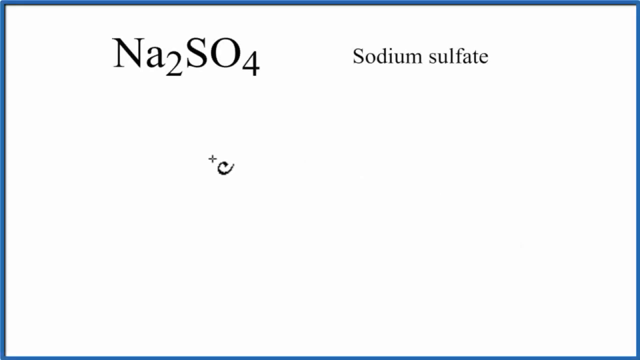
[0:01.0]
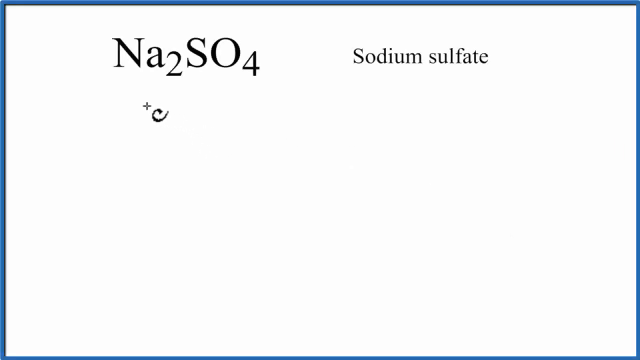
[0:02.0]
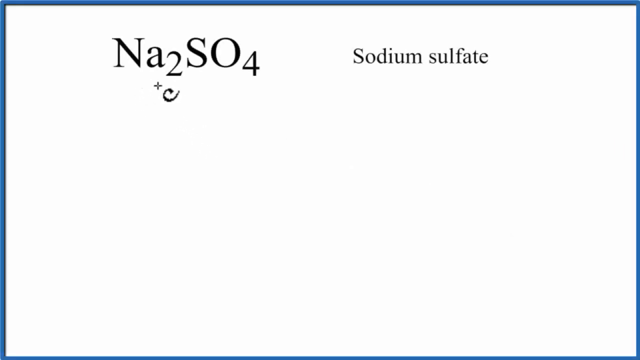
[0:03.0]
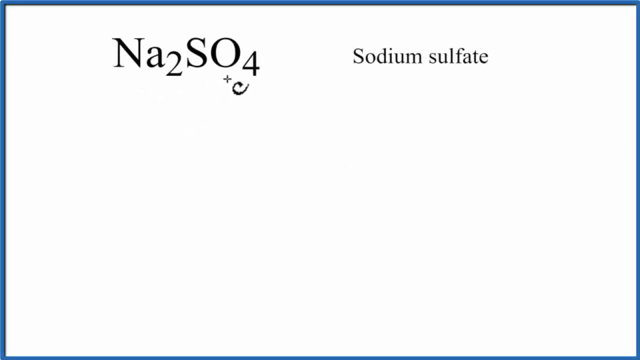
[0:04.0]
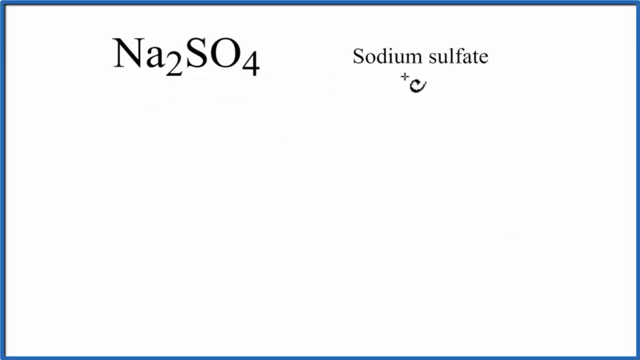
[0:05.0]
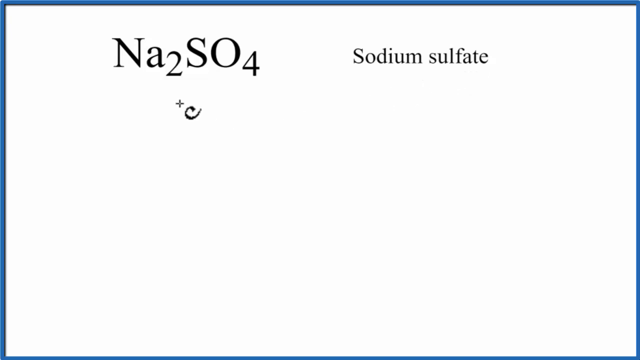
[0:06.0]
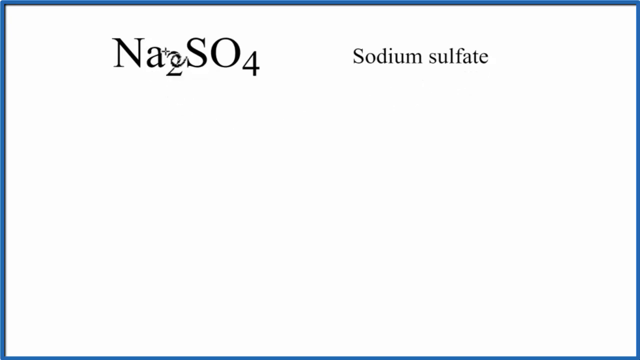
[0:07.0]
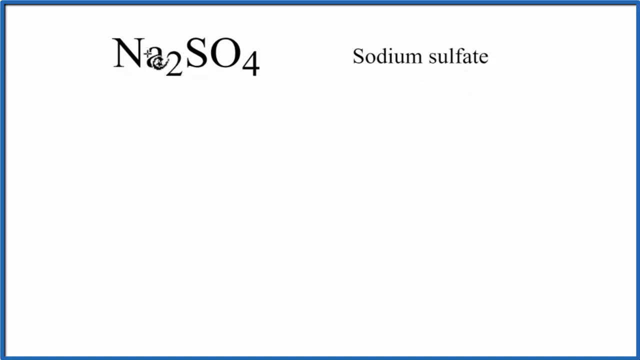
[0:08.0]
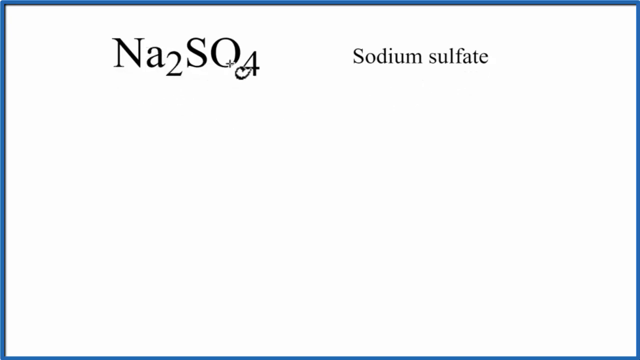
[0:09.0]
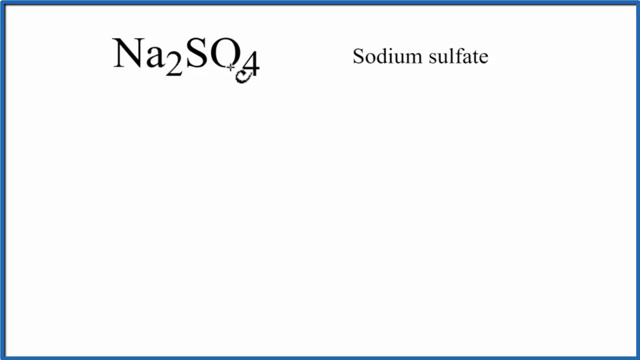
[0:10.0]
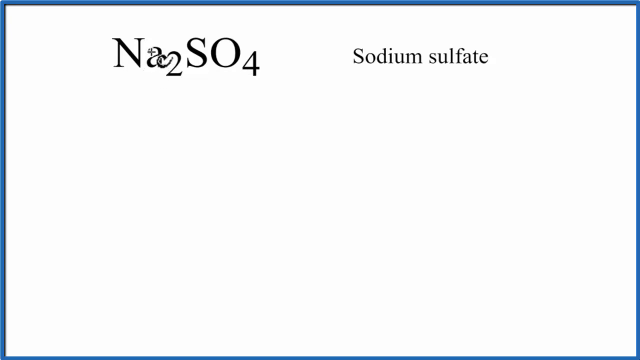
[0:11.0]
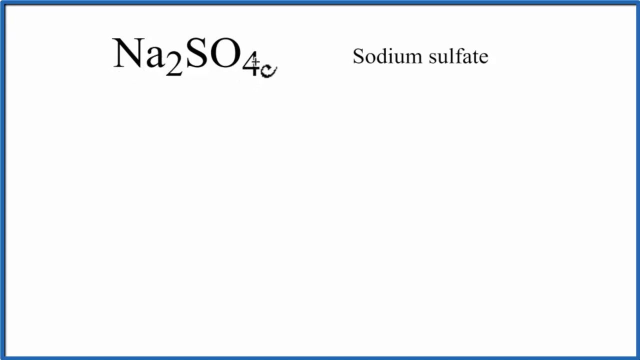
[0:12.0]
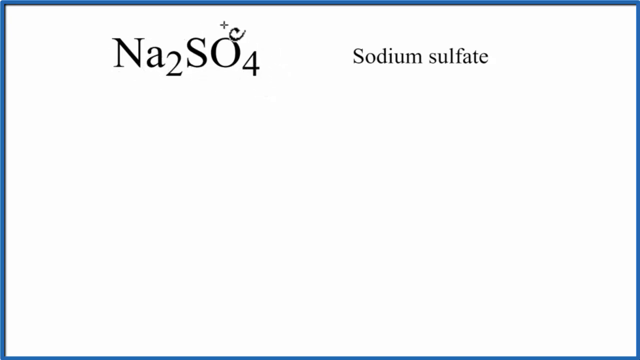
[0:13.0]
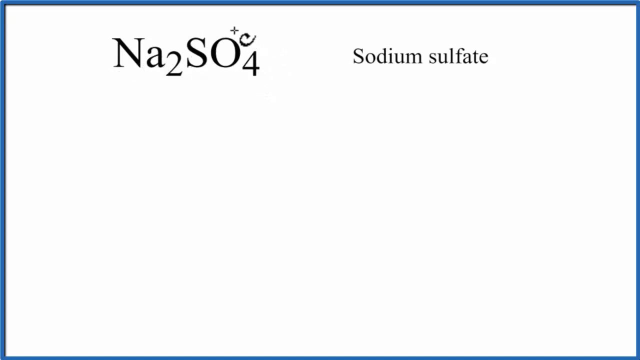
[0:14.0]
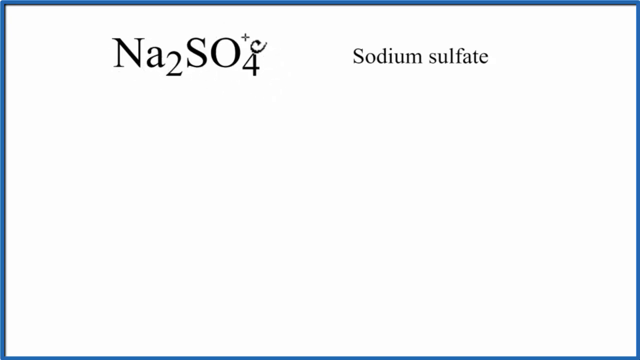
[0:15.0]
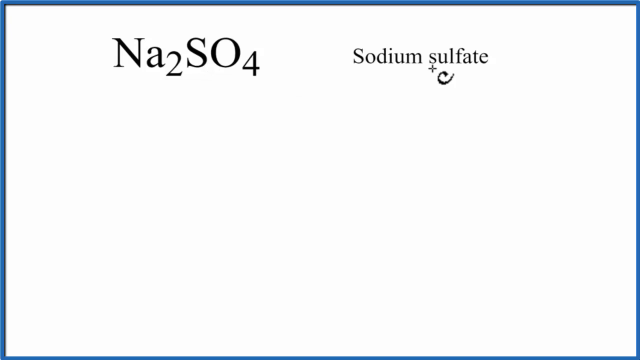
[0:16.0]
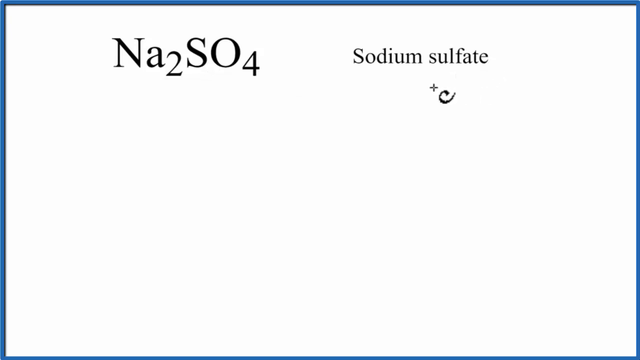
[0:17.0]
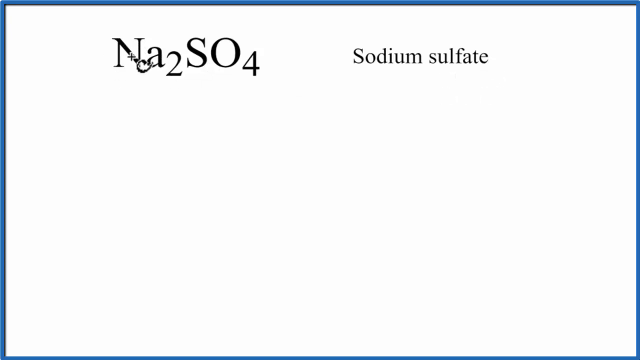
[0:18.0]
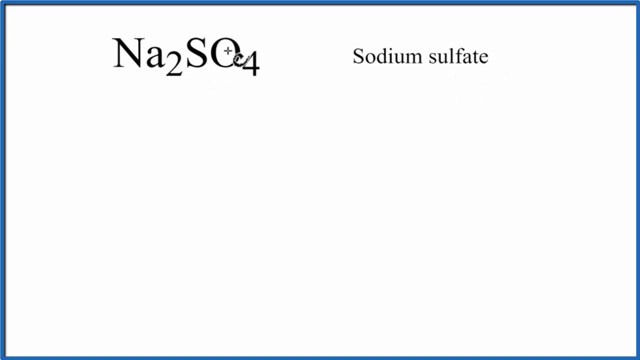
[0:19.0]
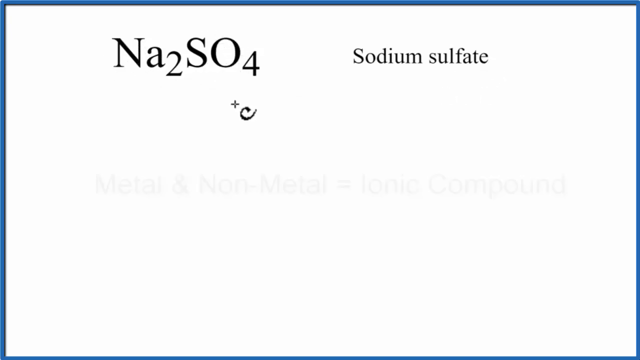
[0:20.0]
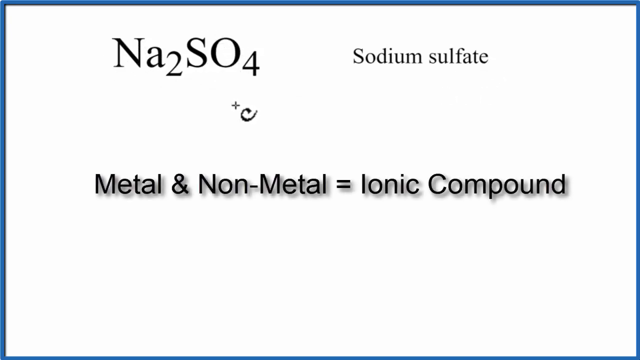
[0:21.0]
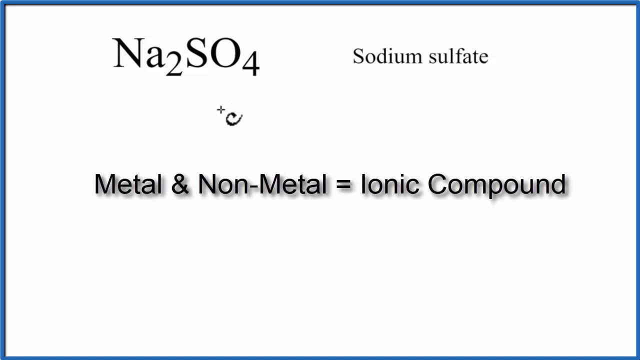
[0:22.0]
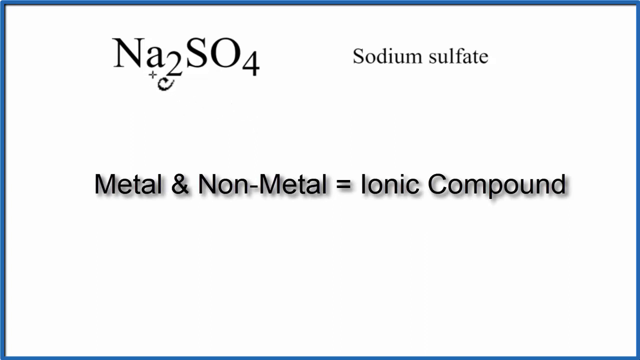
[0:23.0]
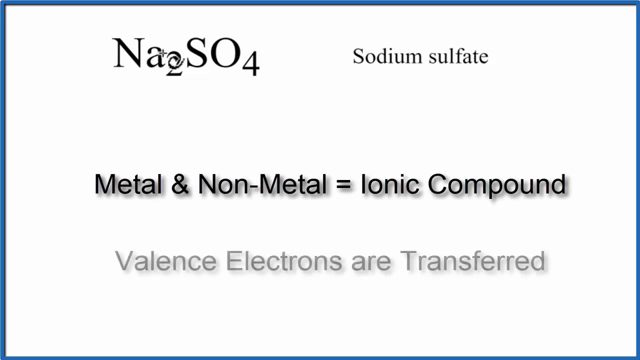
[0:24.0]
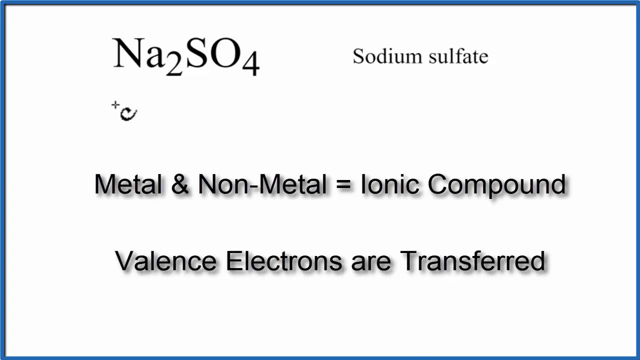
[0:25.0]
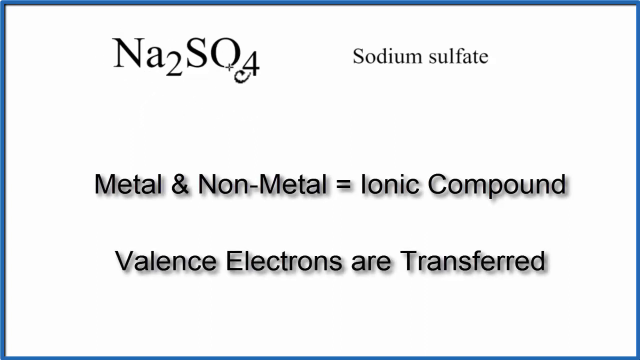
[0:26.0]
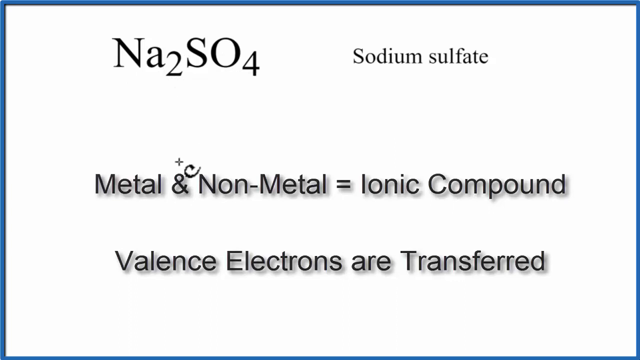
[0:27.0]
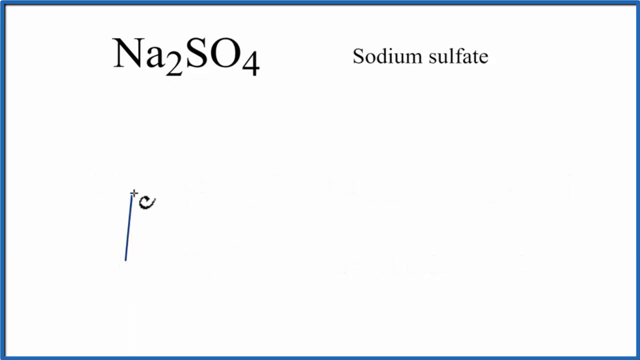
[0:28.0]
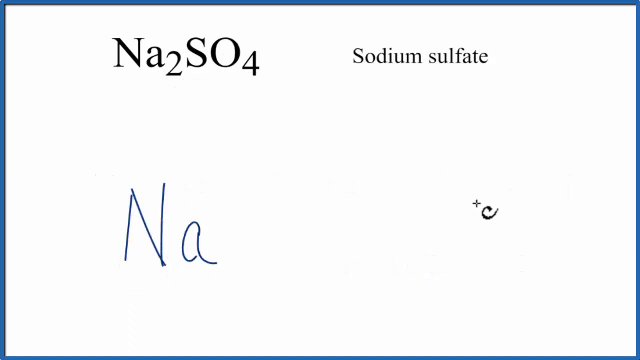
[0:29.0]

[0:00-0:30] A lesson about sodium sulfate, Na2SO4, is shown, apparently a chemistry lesson based on the text on screen. The text is fairly large and black on a completely white background. The mouse pointer appears as a plus sign, so the lesson seems to be on a whiteboard, or at least an online whiteboard, on a computer.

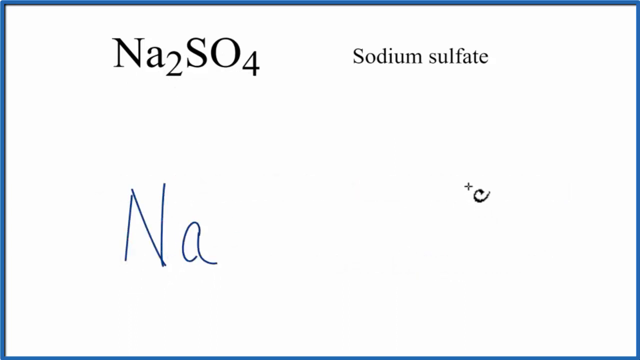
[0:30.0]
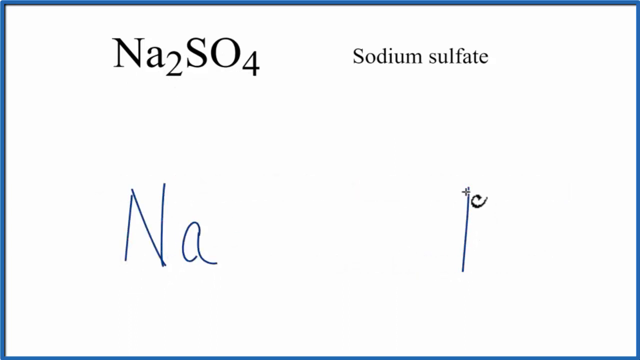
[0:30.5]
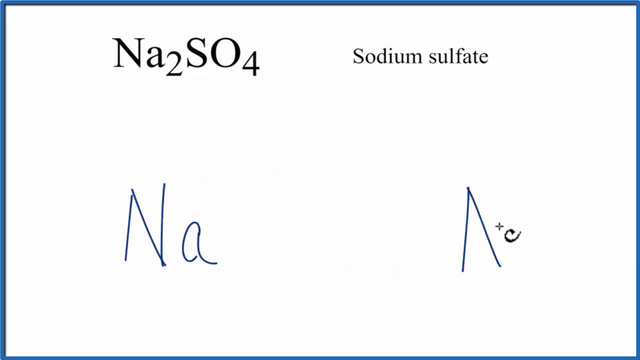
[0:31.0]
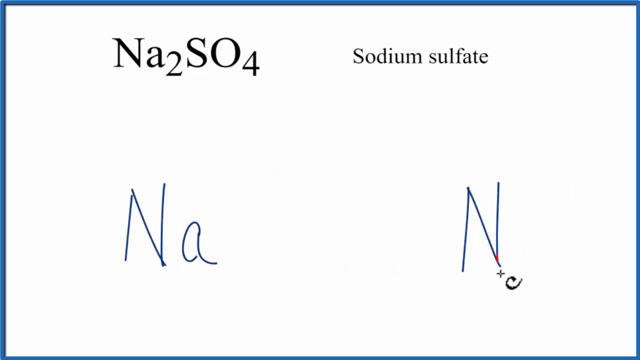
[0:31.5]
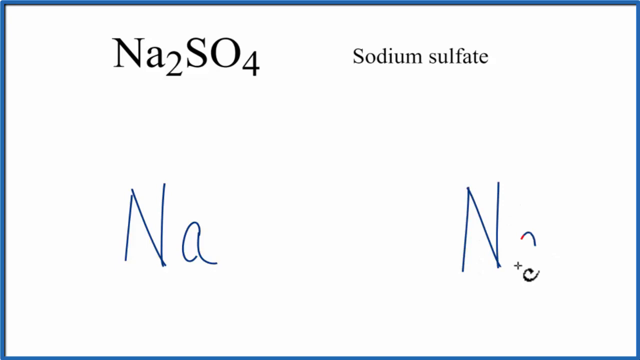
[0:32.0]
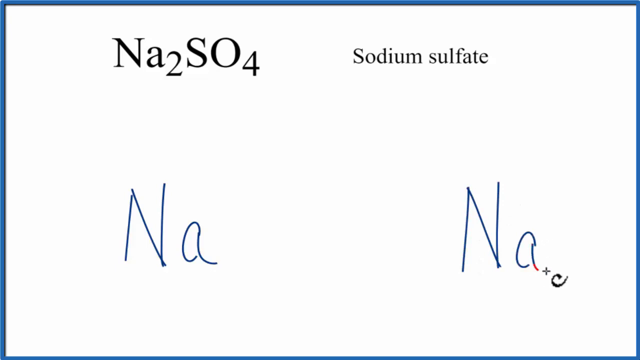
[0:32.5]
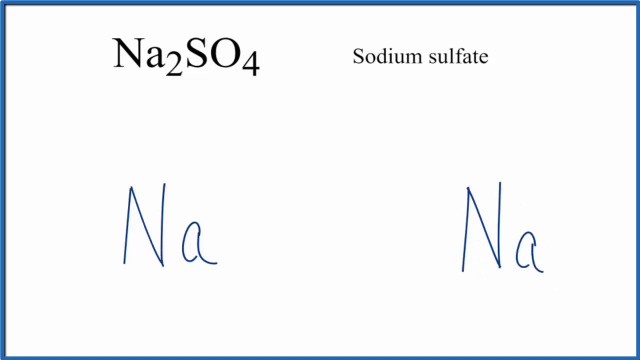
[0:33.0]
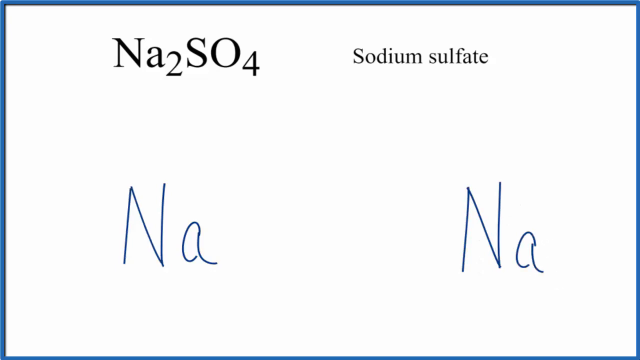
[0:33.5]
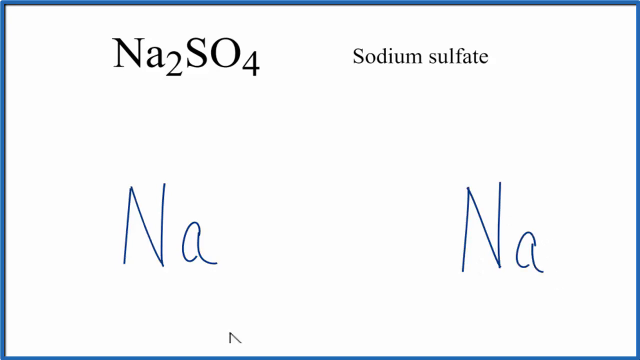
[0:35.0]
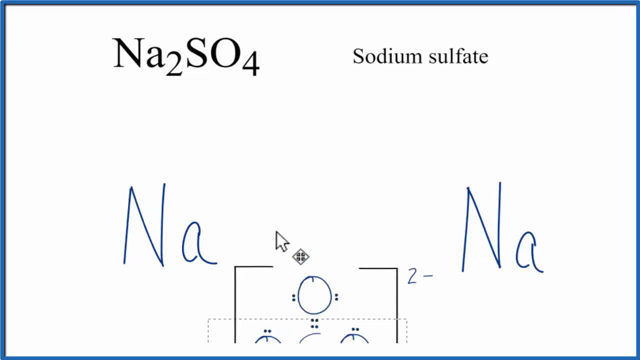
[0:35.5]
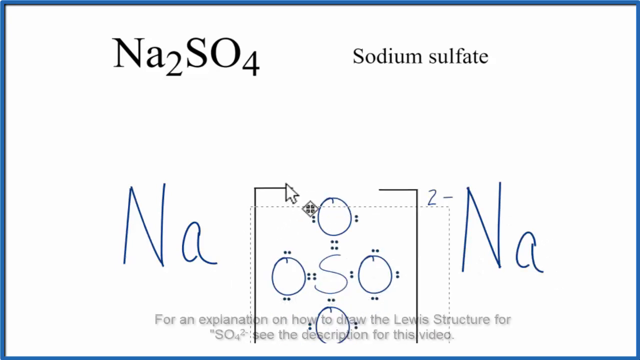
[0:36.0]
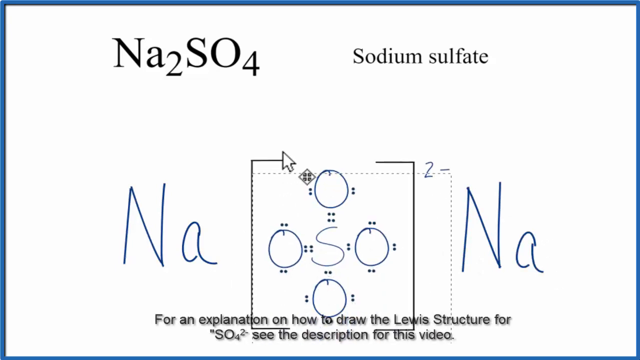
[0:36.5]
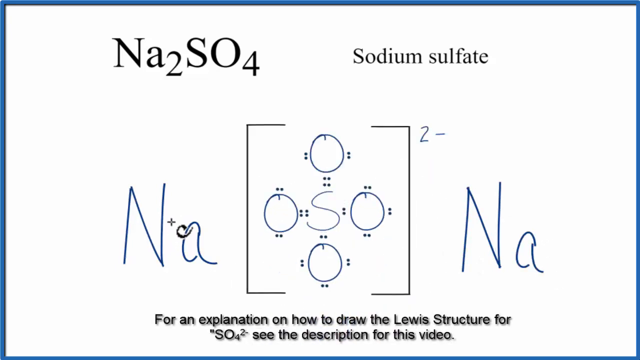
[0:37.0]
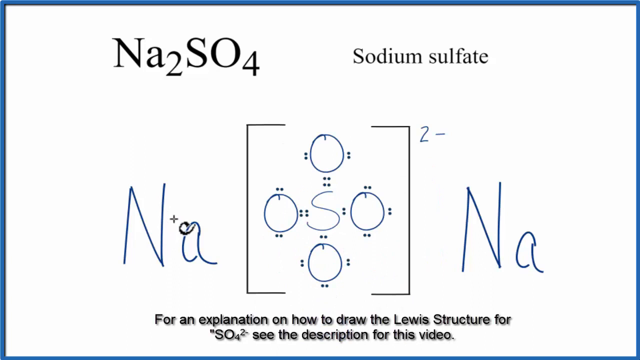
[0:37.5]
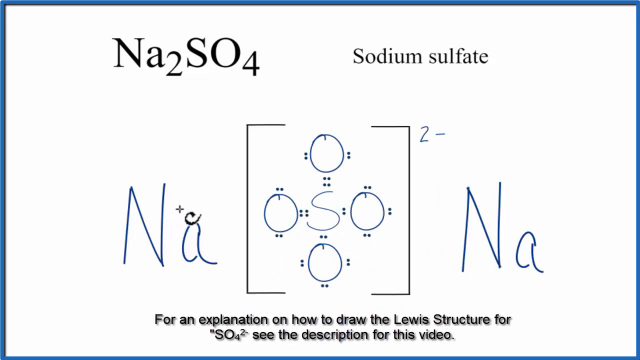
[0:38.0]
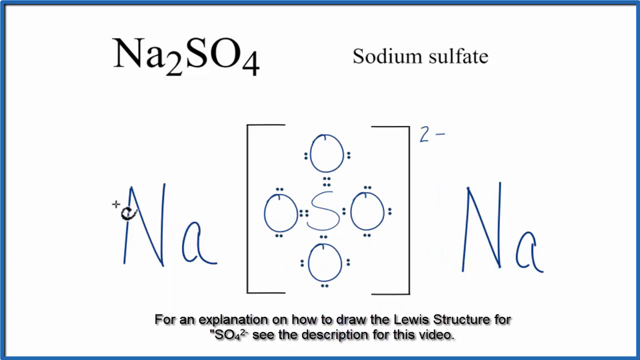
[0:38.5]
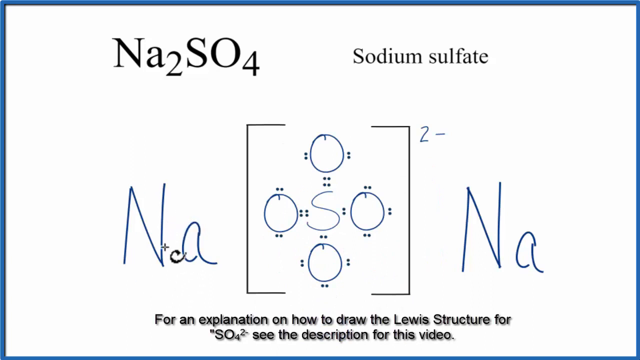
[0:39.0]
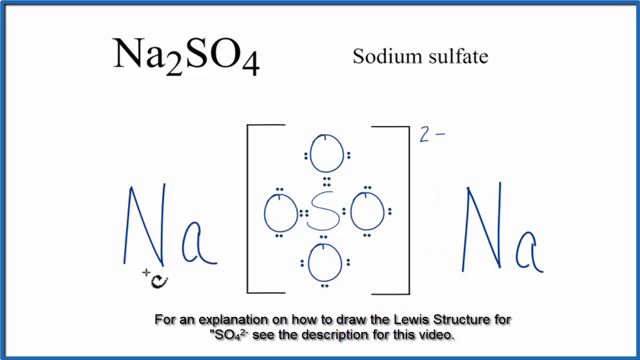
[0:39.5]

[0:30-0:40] The presenter draws an Na ion alongside another Na ion, writing the Na in blue. The text on screen stays unchanged. A Lewis diagram table of sulfate is brought up.